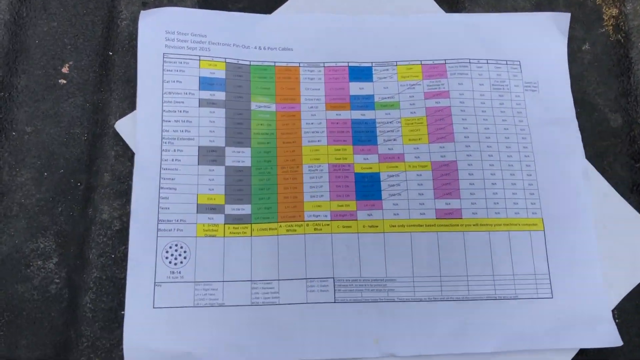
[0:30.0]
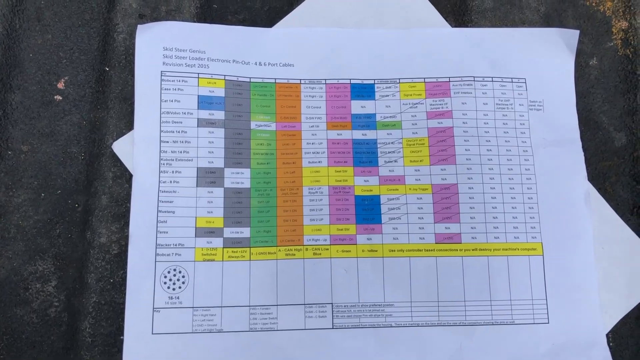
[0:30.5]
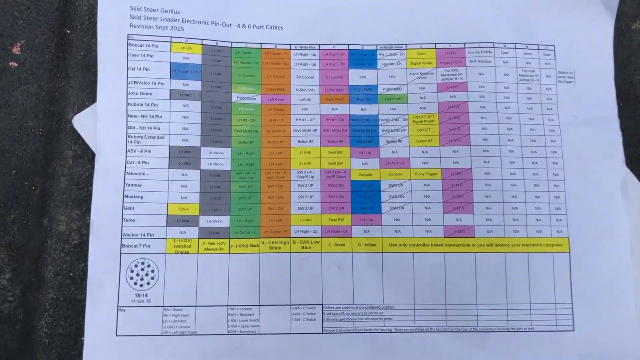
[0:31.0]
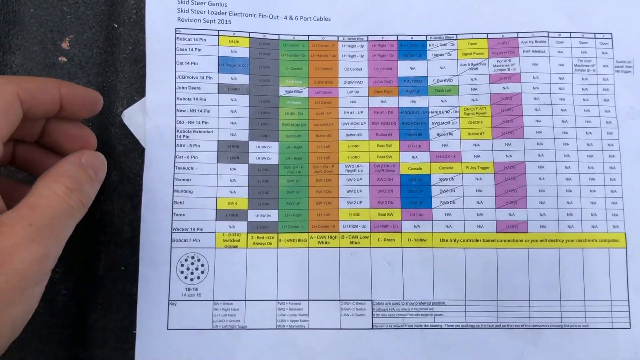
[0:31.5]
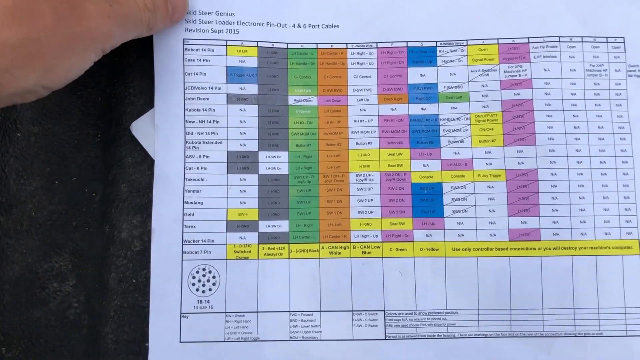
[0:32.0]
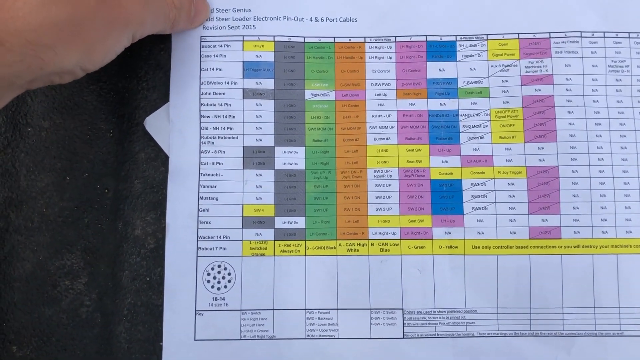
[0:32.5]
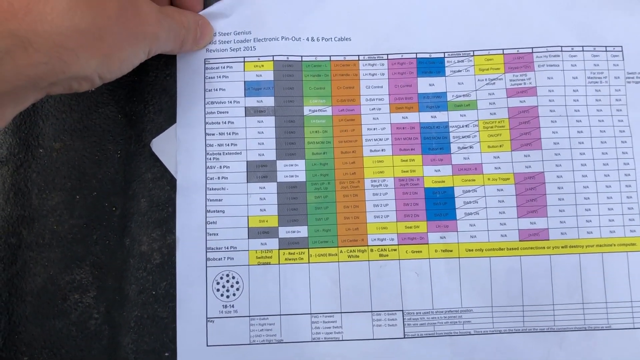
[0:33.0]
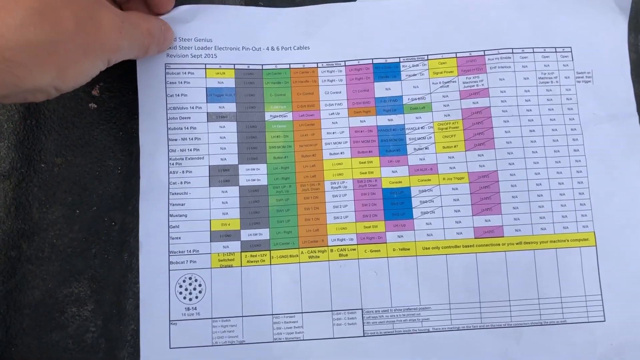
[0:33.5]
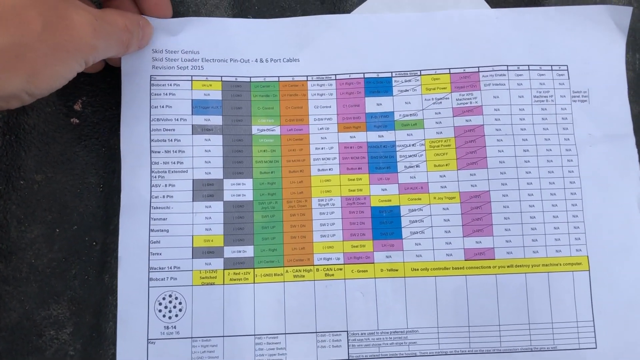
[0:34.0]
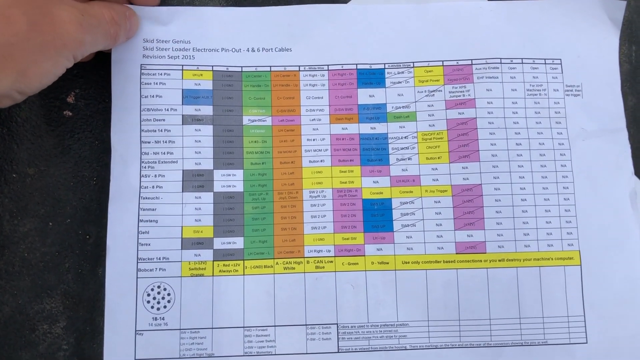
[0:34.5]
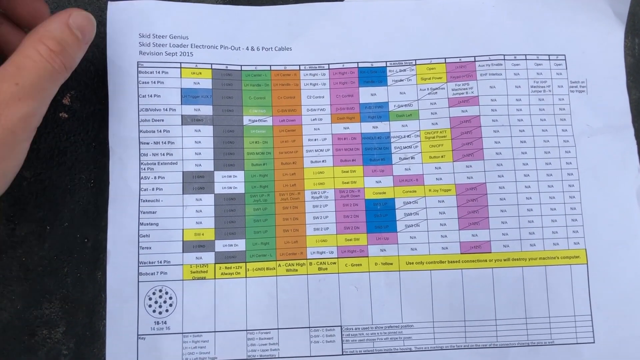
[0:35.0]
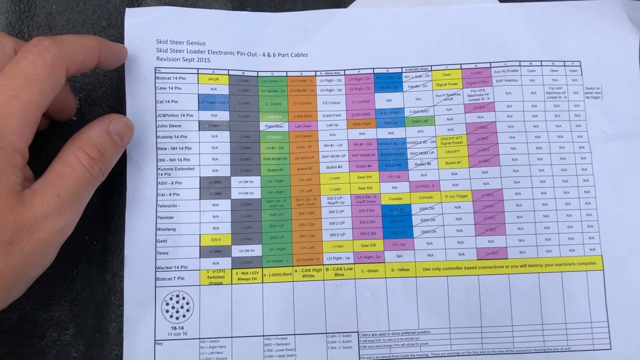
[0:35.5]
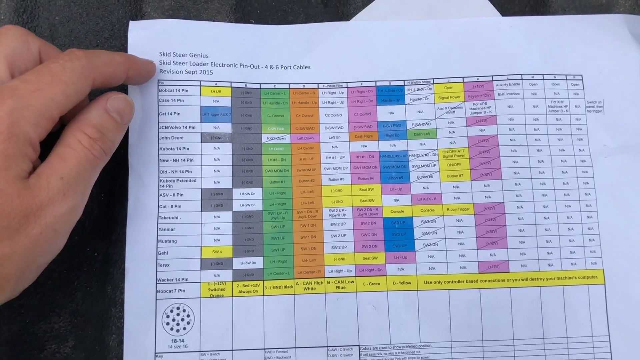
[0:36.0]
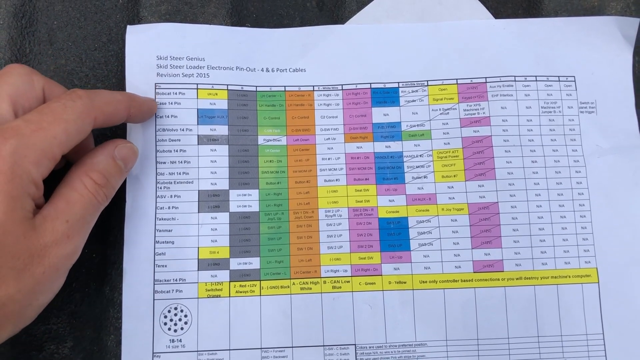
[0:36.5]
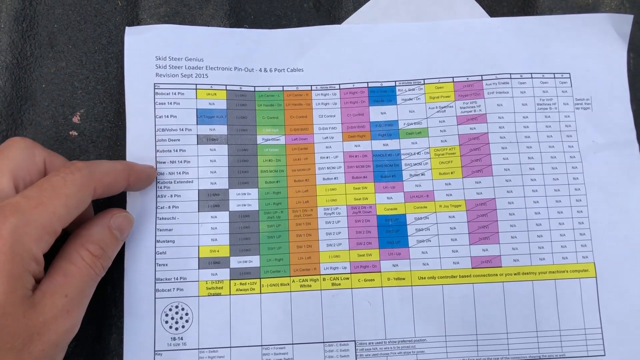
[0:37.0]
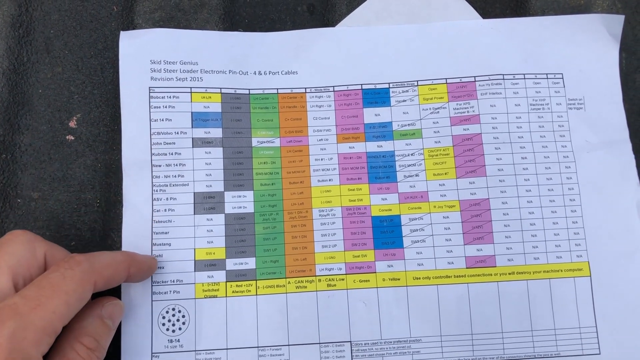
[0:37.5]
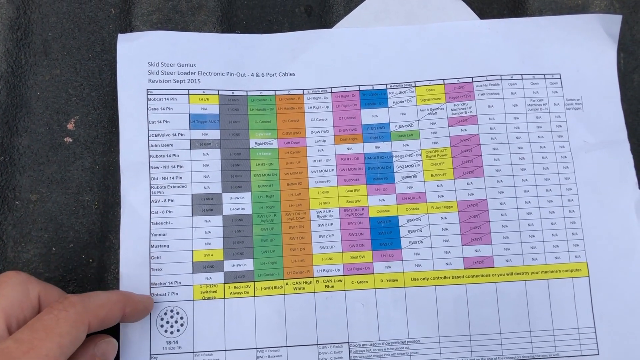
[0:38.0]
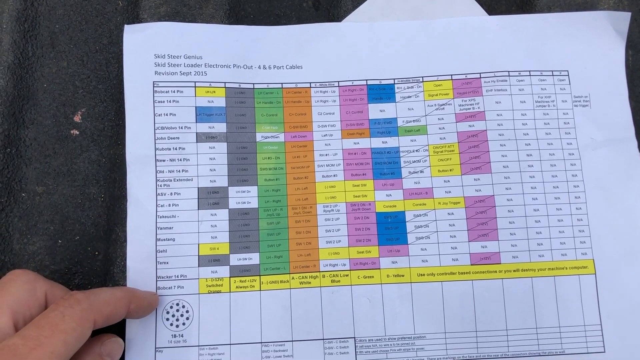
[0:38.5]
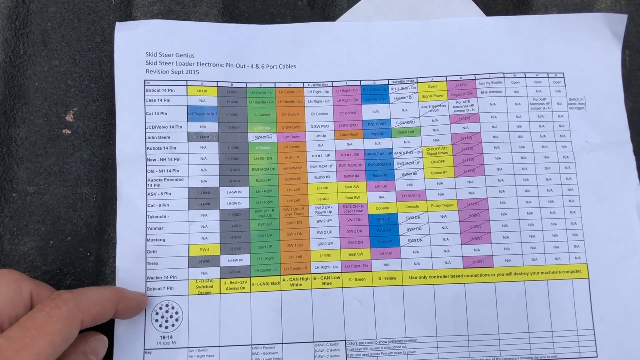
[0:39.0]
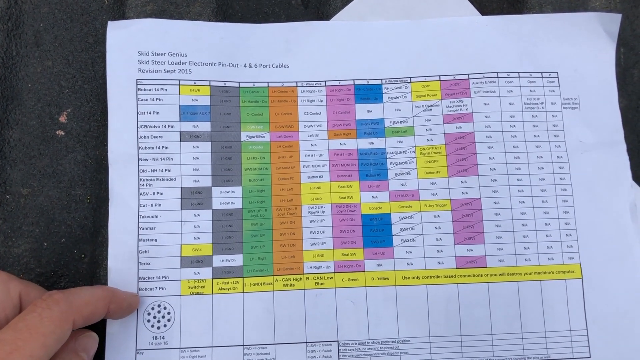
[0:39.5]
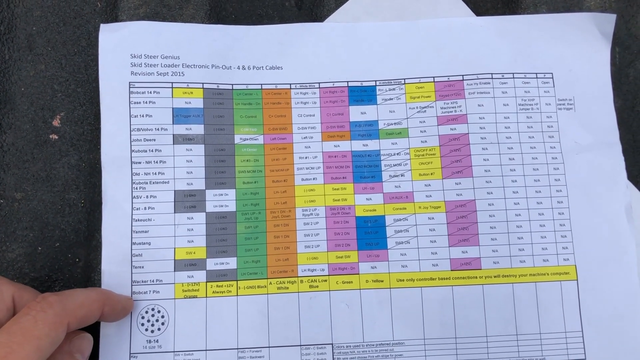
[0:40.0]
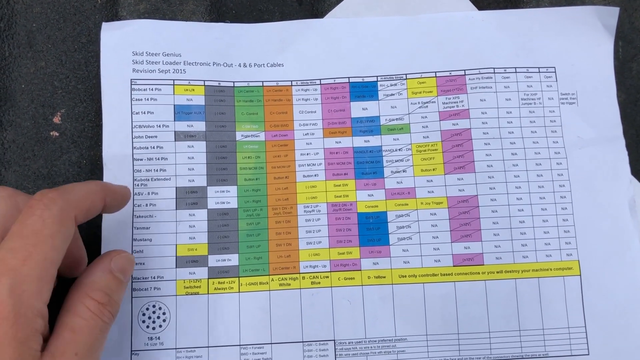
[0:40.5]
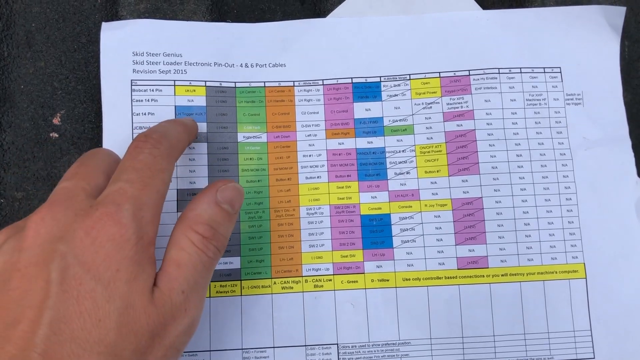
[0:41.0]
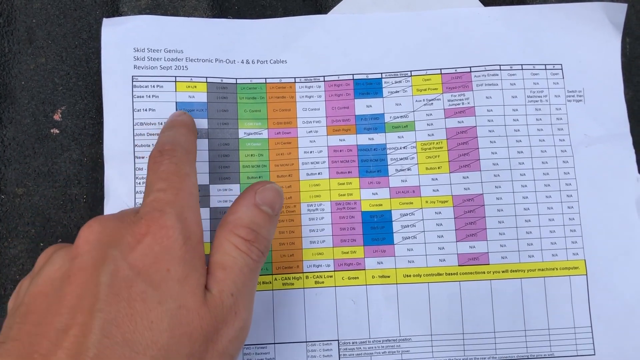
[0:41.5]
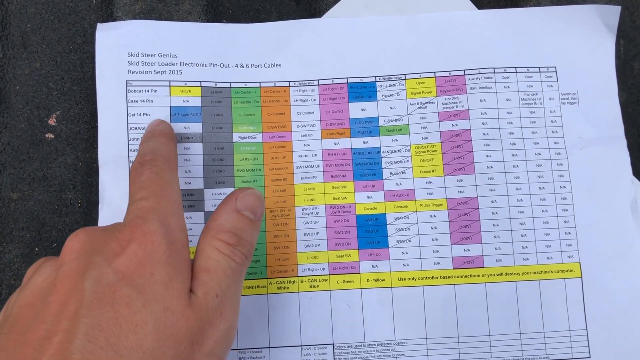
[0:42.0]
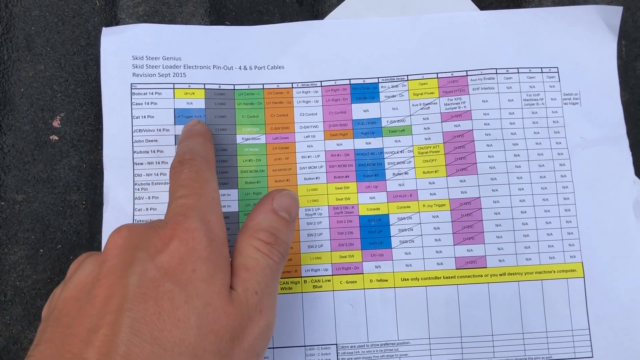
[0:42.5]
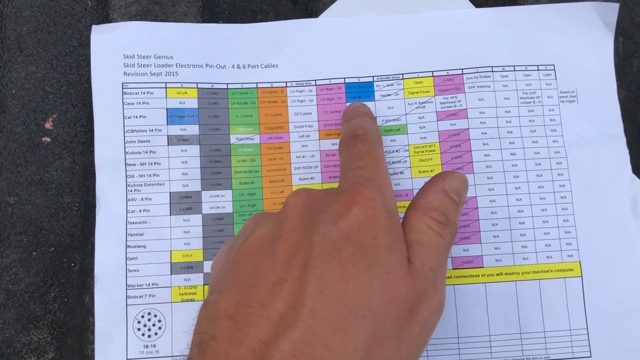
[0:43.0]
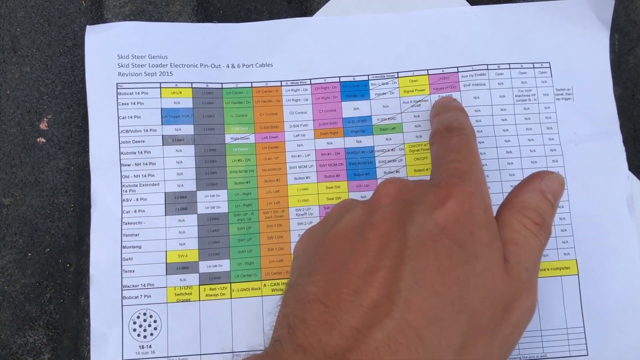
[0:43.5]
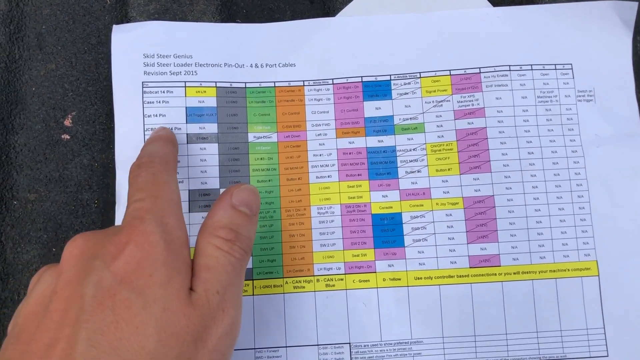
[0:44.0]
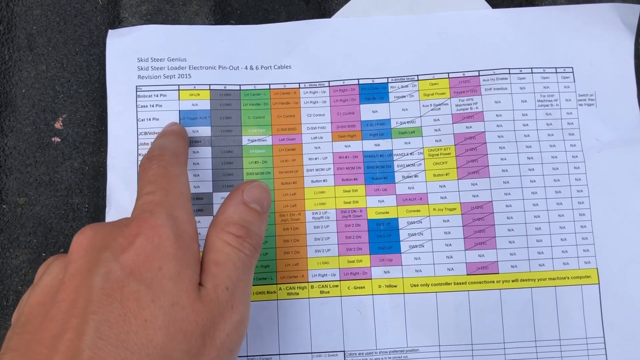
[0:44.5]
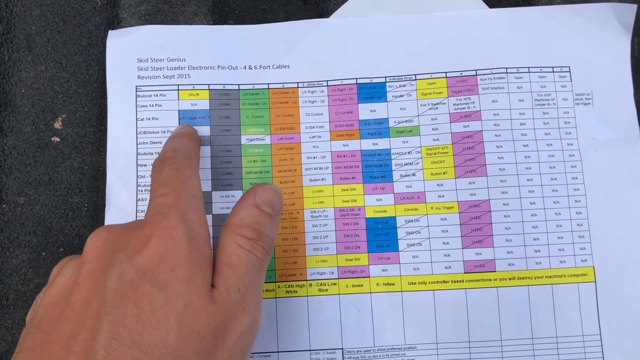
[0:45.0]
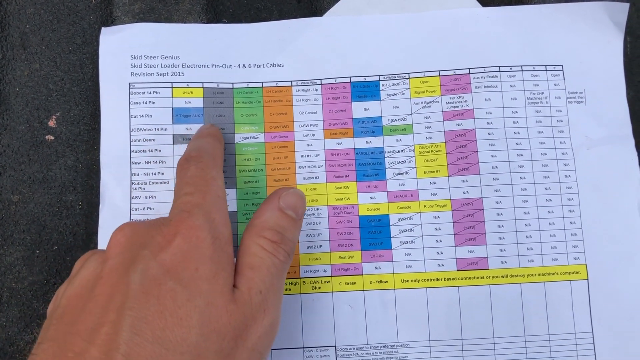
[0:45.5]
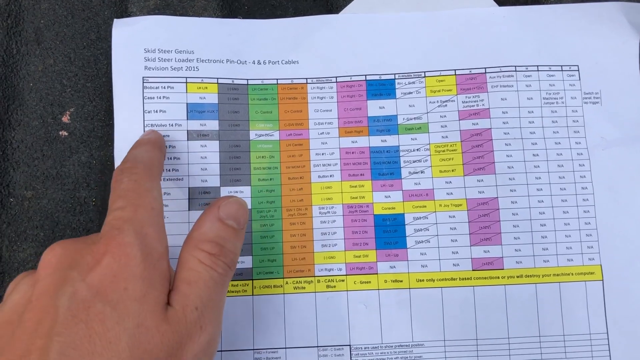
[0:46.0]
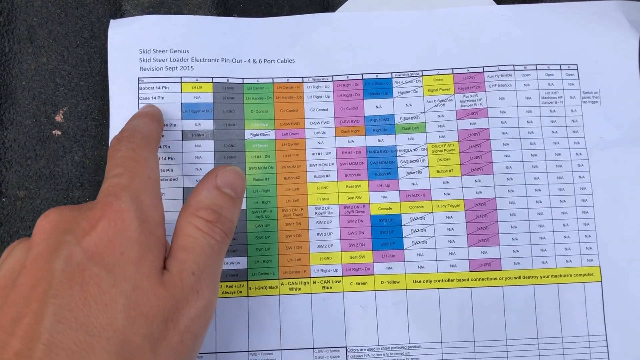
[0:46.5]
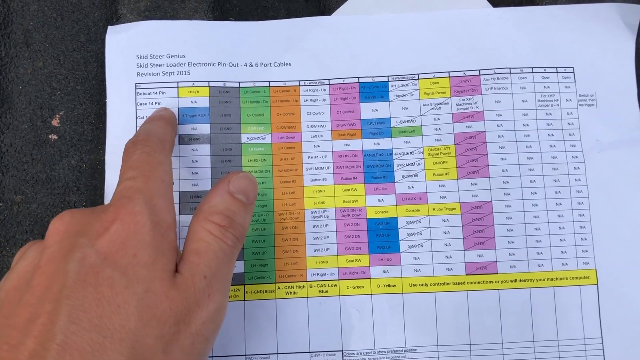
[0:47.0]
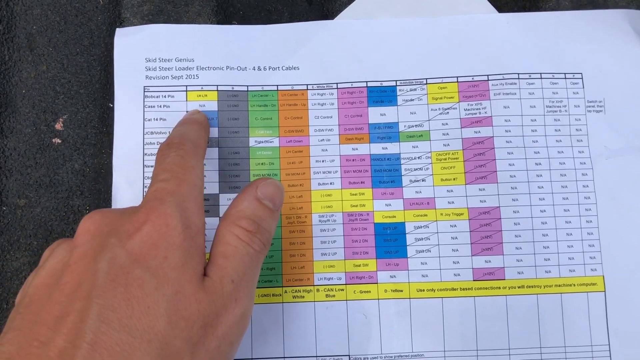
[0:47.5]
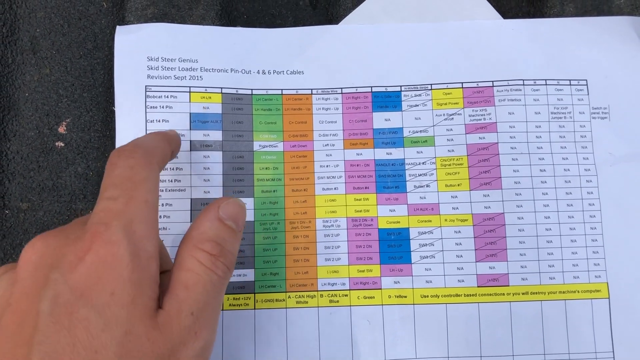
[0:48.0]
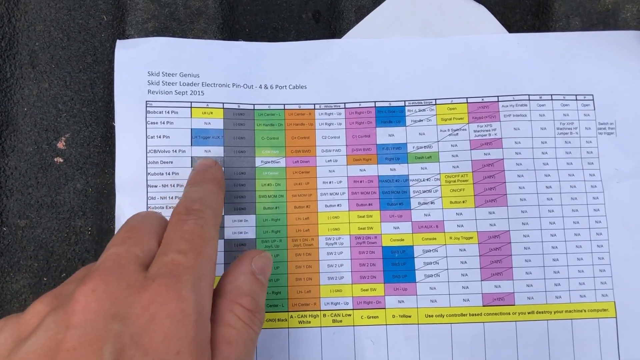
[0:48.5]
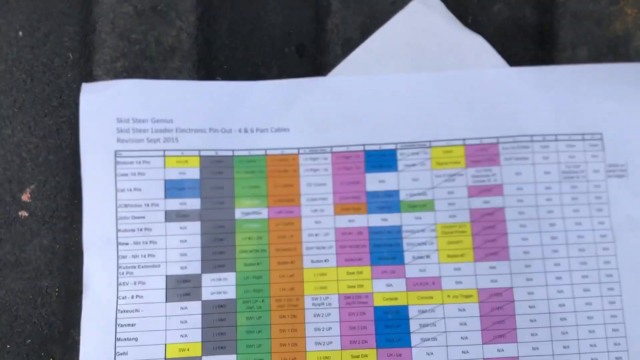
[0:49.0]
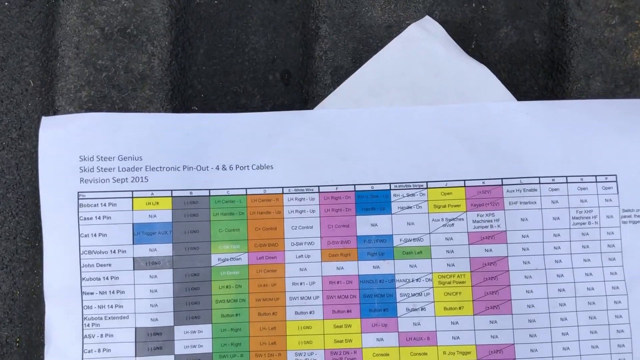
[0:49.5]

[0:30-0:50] The manual looks like an Excel report with different shades of colour: a green column, a pink column, a white column and another green column, a blue row and a blue column, a yellow row and a white row. It is probably a report on how to use this equipment. The man uses his hand to trace a particular piece of information from beginning to end, trying to locate a particular number; he highlights the blue and traces horizontally to the end. He zooms in and shows the report in detail.